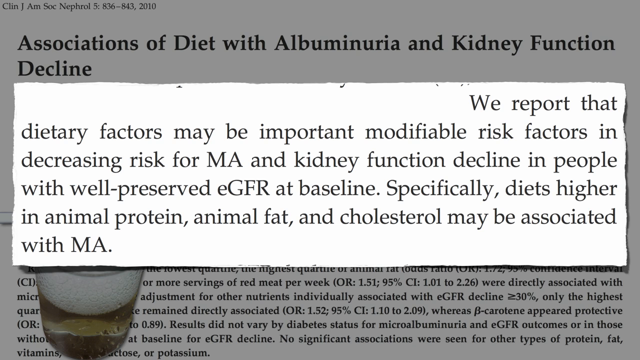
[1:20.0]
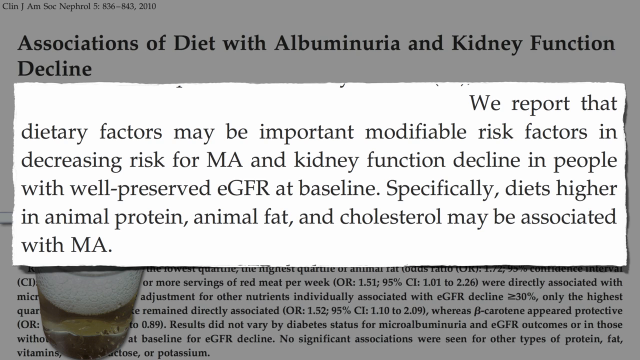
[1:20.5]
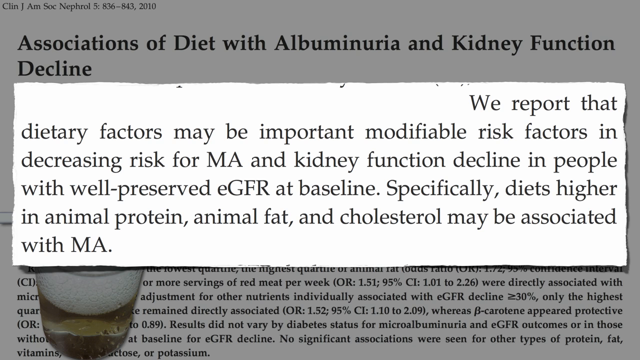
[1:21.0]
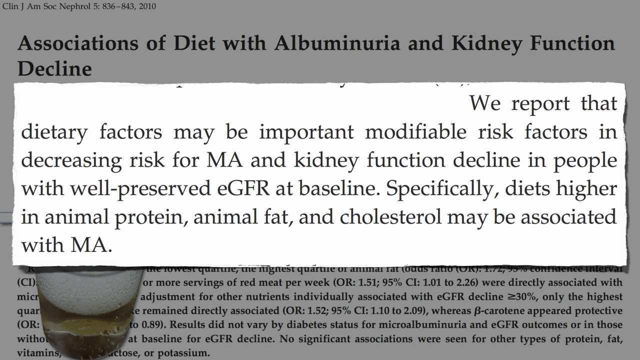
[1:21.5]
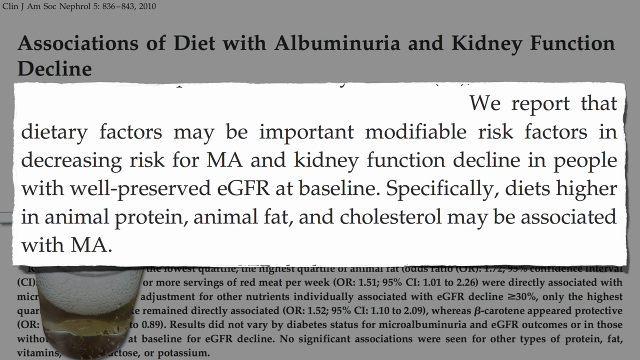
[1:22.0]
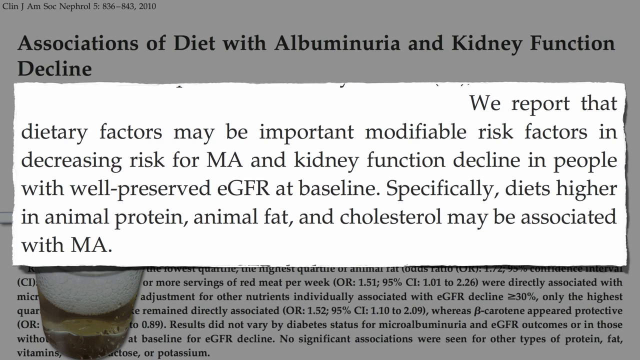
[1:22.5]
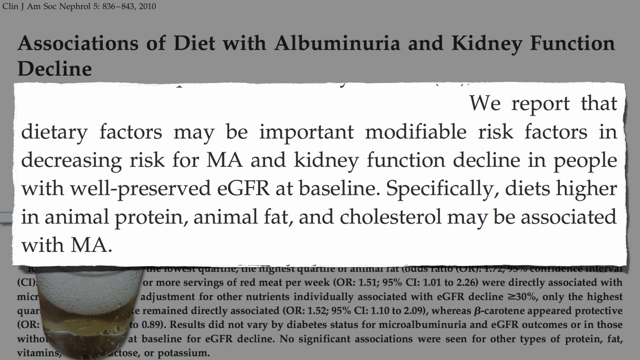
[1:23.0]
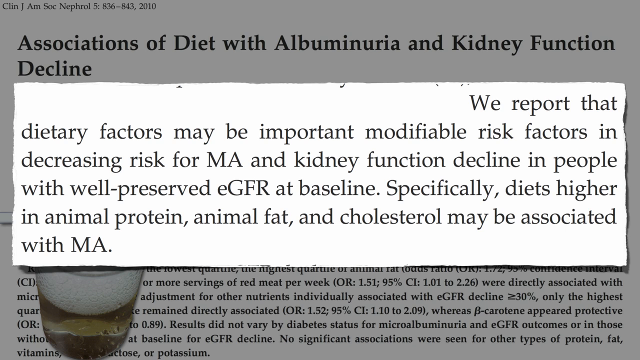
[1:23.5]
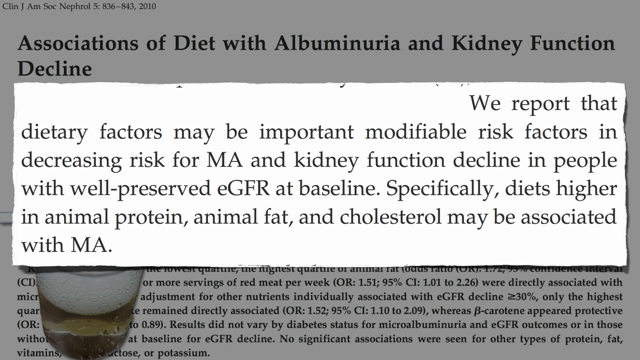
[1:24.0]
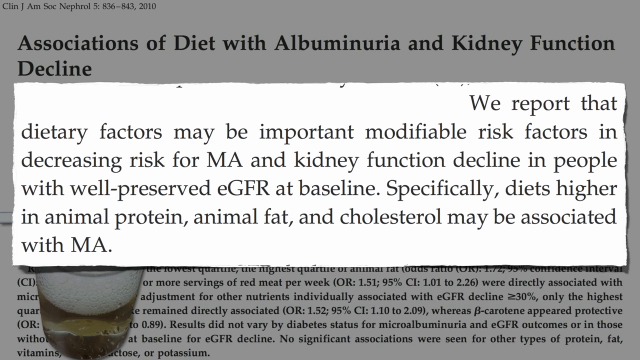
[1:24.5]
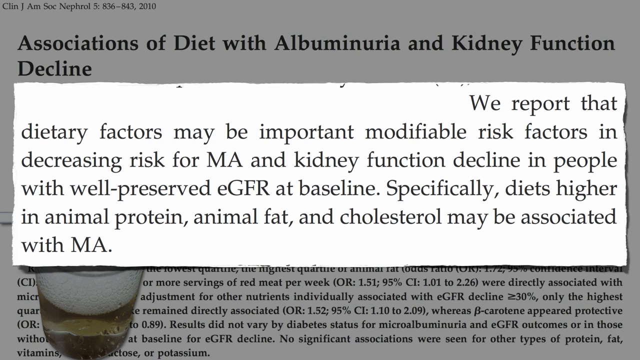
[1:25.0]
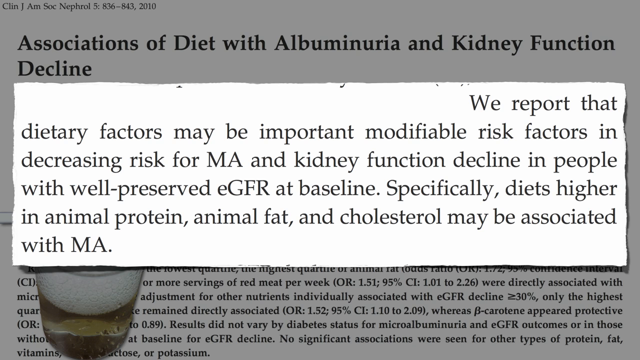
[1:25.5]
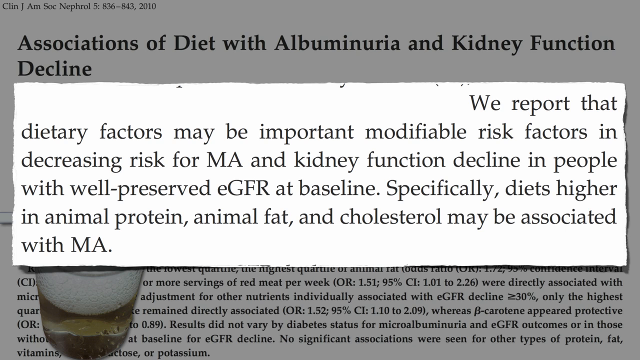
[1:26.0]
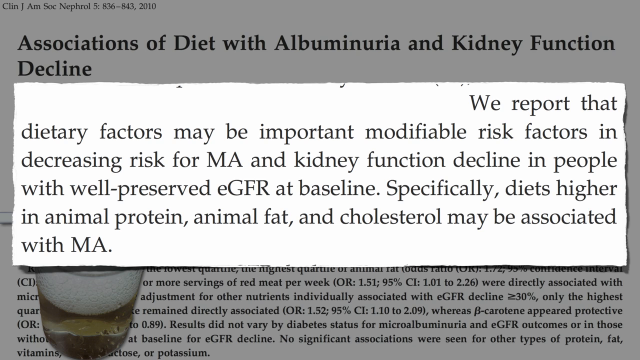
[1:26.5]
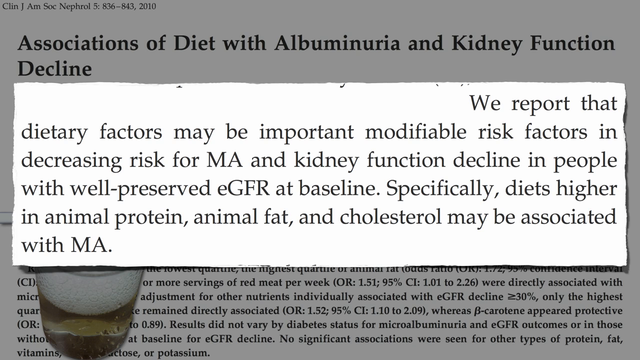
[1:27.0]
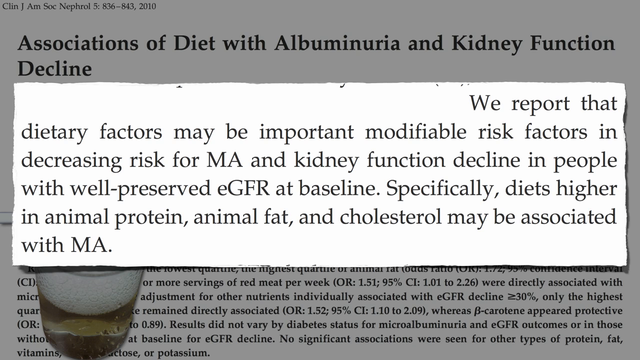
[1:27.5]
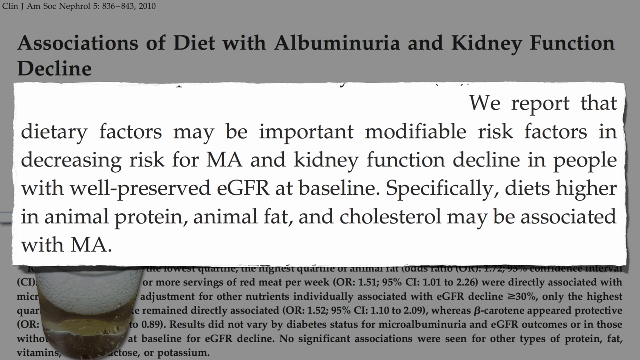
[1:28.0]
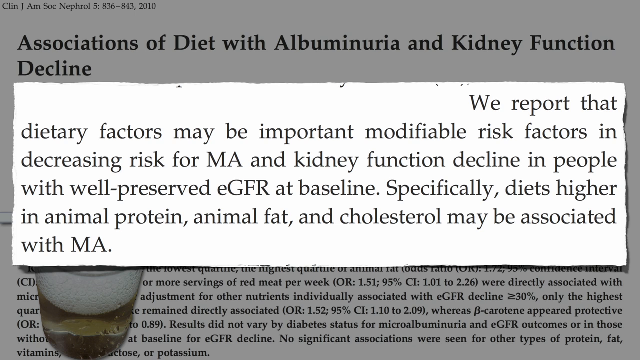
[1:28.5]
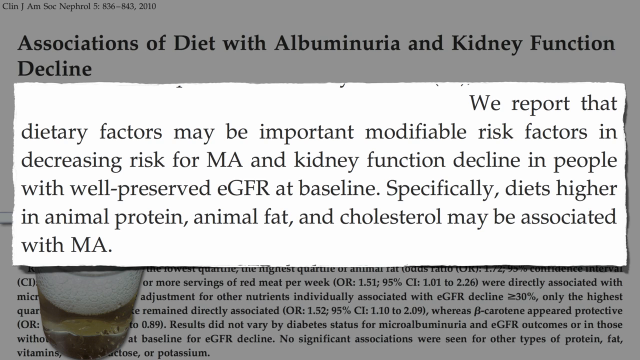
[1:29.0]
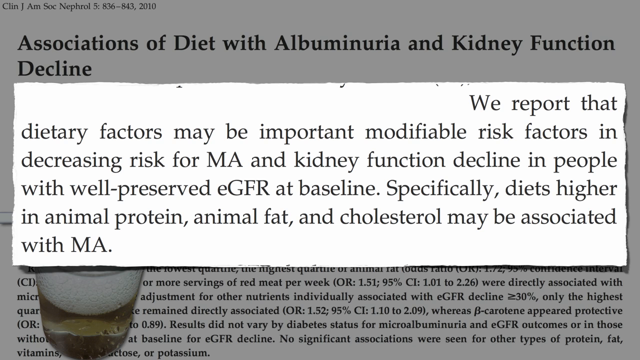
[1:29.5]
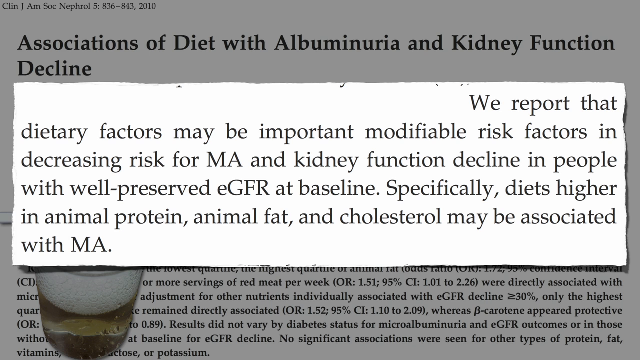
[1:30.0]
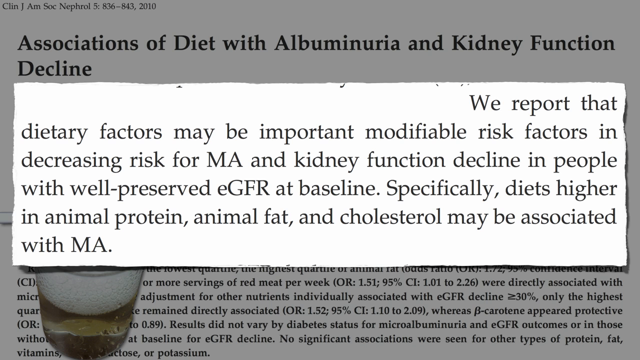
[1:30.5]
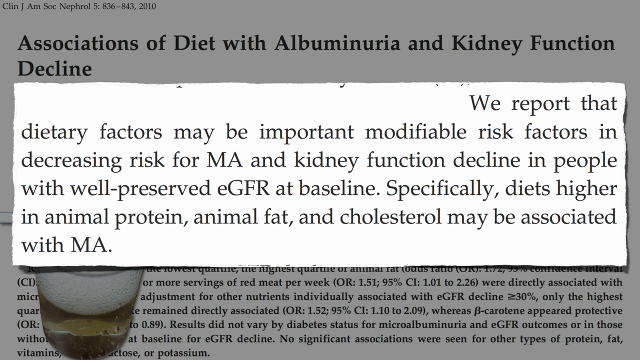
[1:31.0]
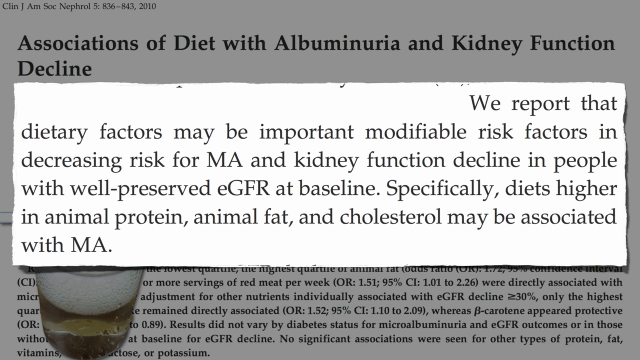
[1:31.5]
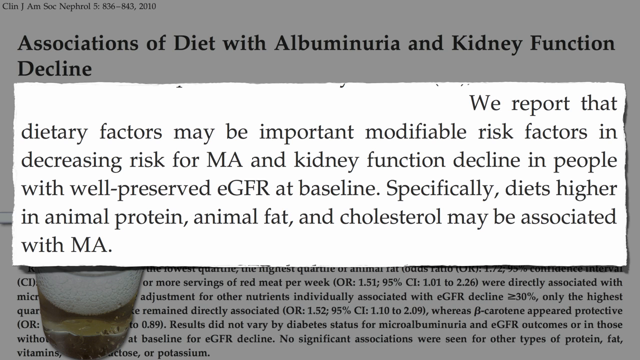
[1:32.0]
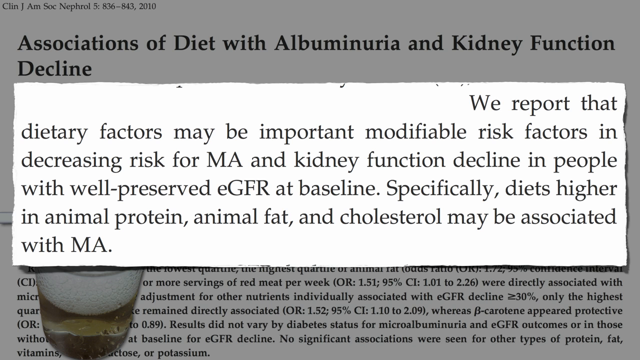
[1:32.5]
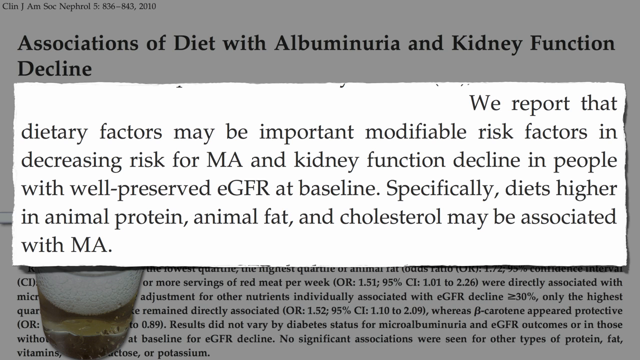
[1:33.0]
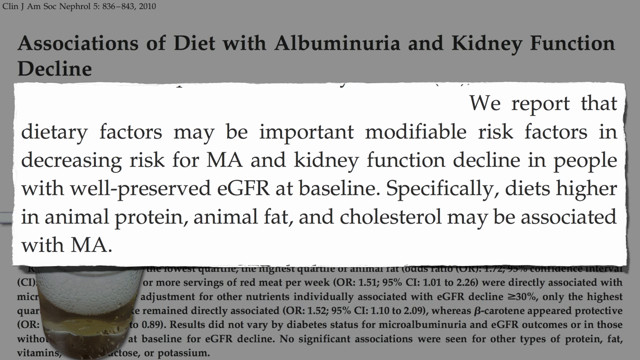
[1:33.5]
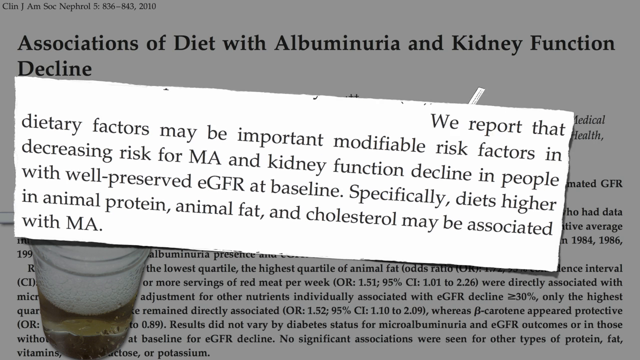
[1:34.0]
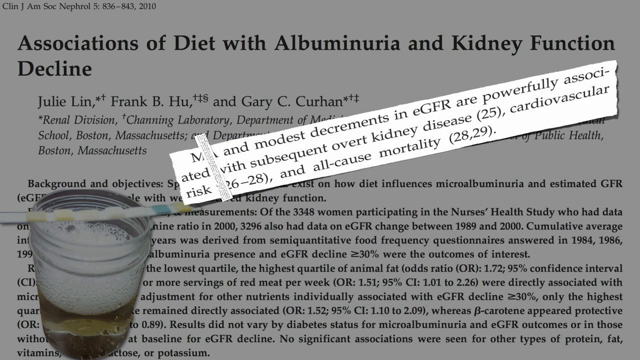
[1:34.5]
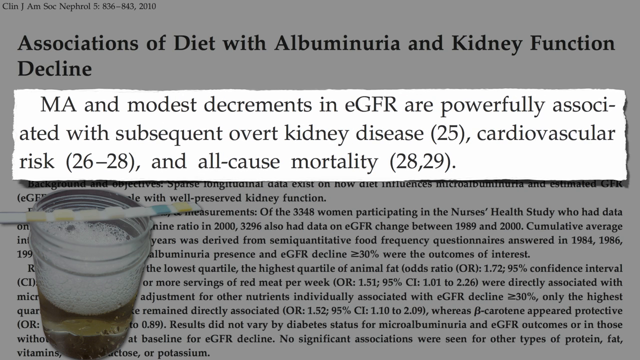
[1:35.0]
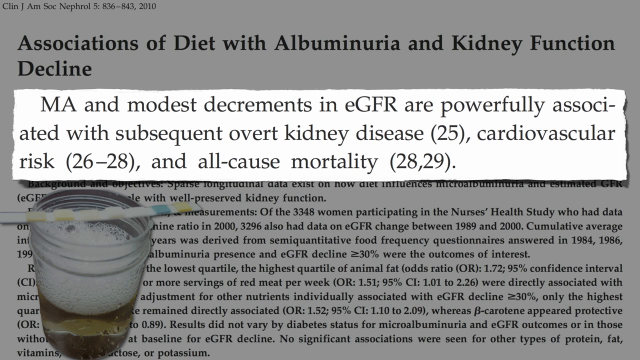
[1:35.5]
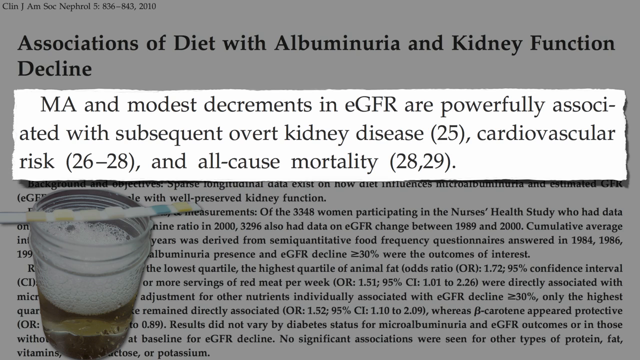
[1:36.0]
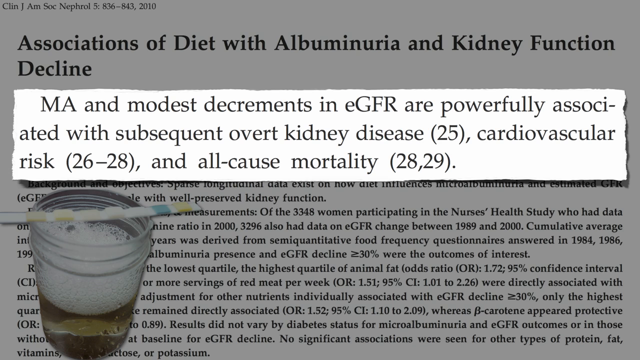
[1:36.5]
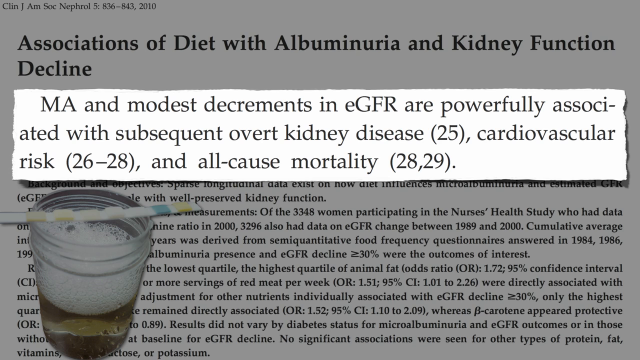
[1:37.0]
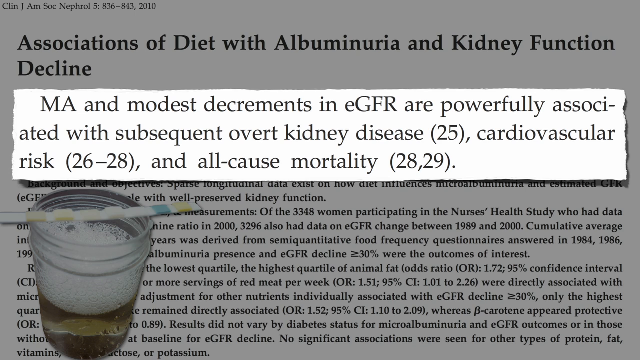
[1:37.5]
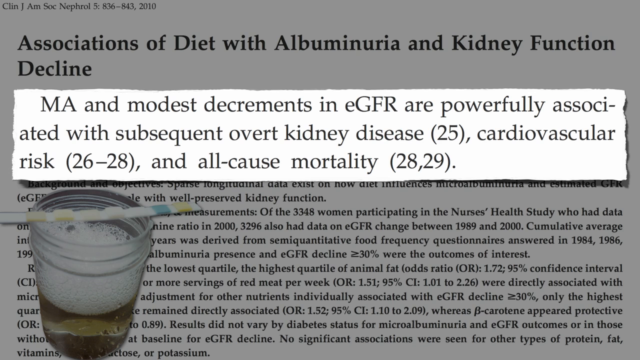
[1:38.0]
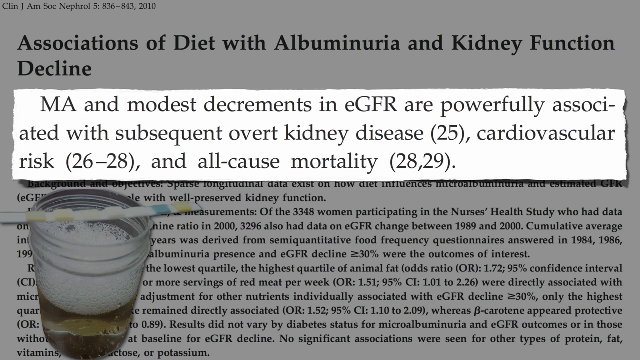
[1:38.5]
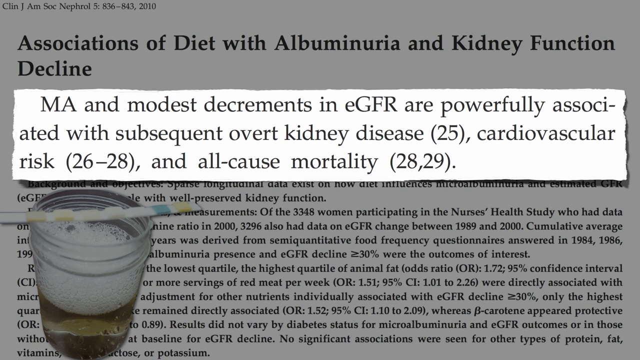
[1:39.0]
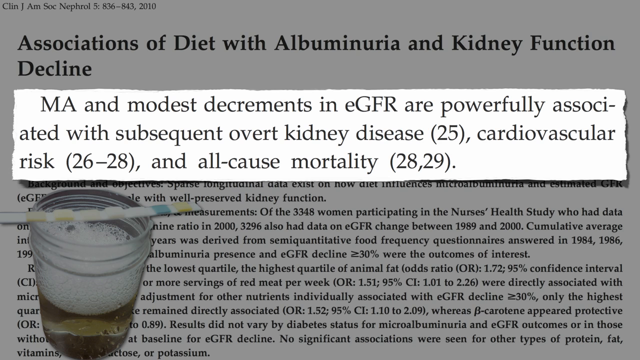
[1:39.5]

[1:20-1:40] A window showing highlighted parts of the study is on screen, reading "we report that dietary factors may be important modifiable risk factors in decreasing risk for MA and kidney function decline in people with well-preserved EGFR at baseline. Specifically diets higher in animal protein, animal fat and cholesterol may be associated with MA." It then flips to another pop-up that reads "MA and modest decrements in GFR are powerfully associated with subsequent overt kidney disease, 25, cardiovascular risk, 26 to 28 and all cause mortality, 28, 29."